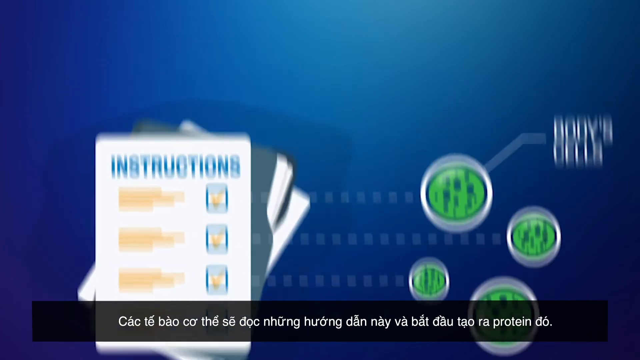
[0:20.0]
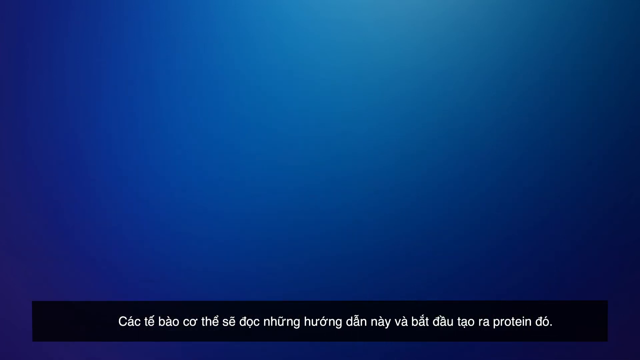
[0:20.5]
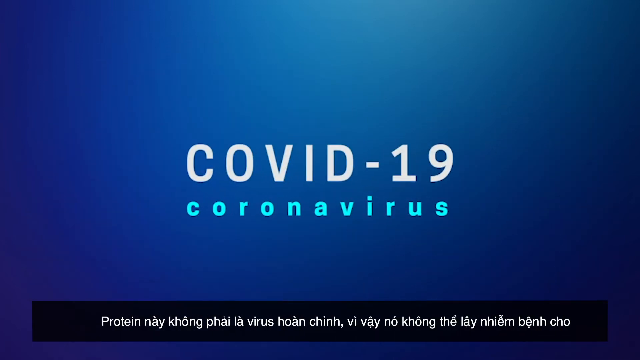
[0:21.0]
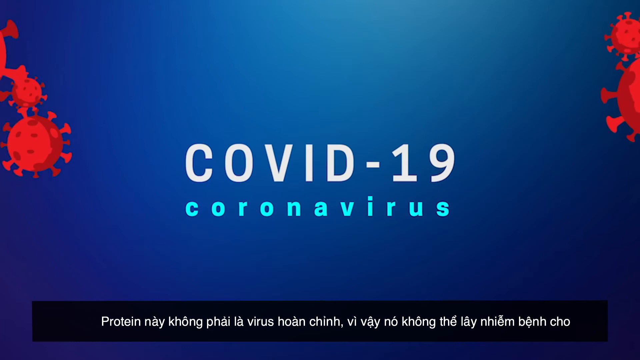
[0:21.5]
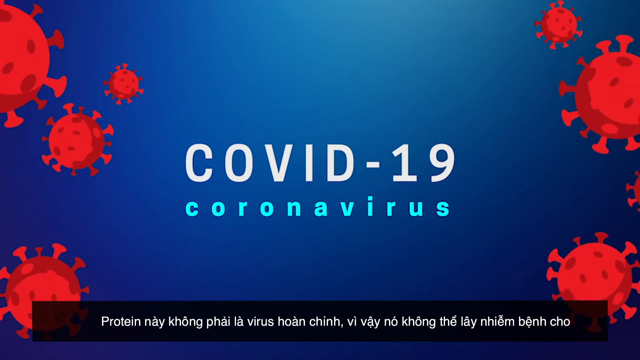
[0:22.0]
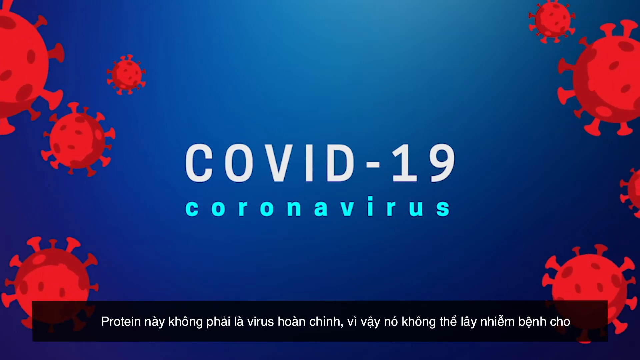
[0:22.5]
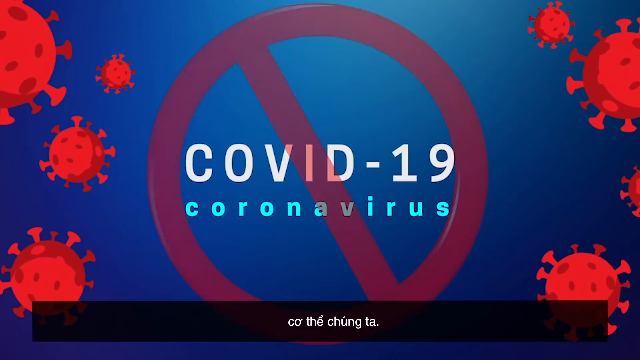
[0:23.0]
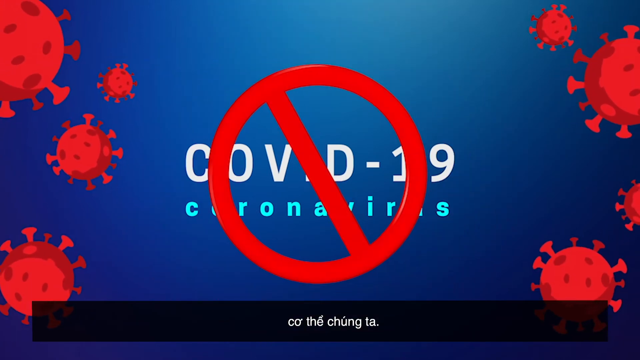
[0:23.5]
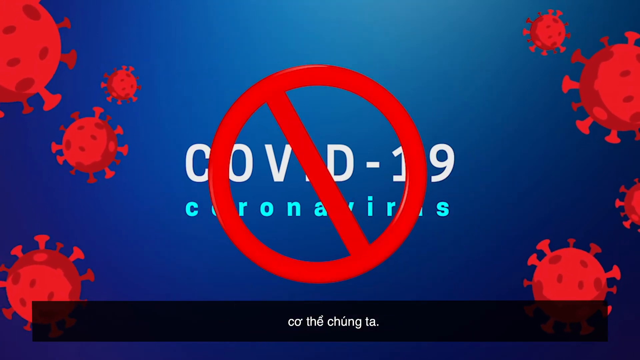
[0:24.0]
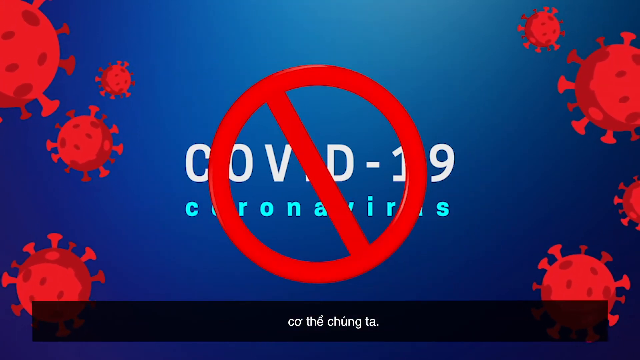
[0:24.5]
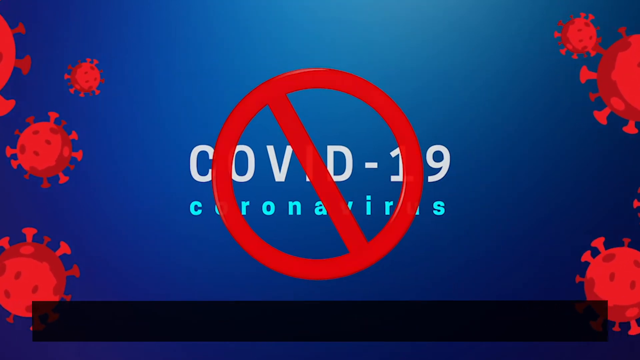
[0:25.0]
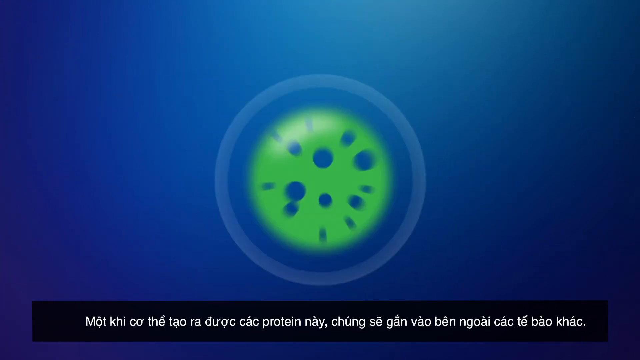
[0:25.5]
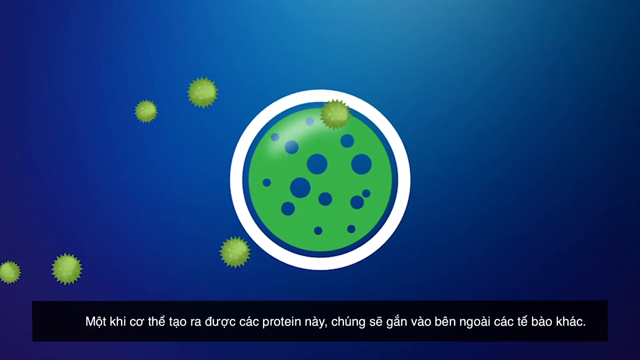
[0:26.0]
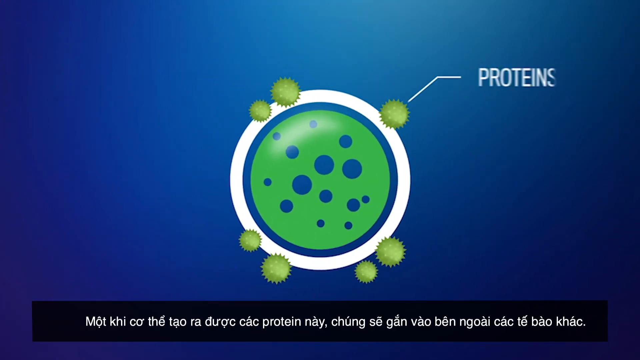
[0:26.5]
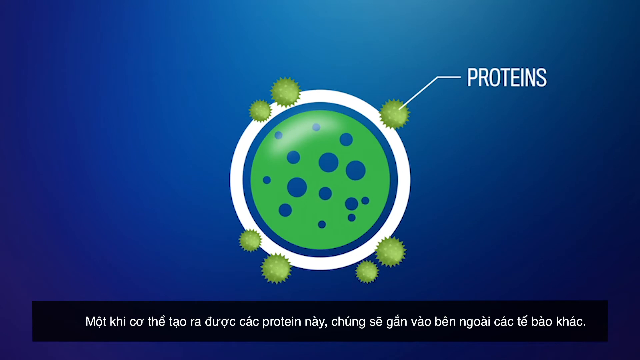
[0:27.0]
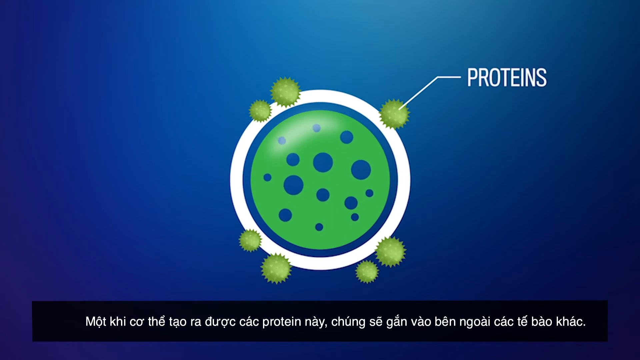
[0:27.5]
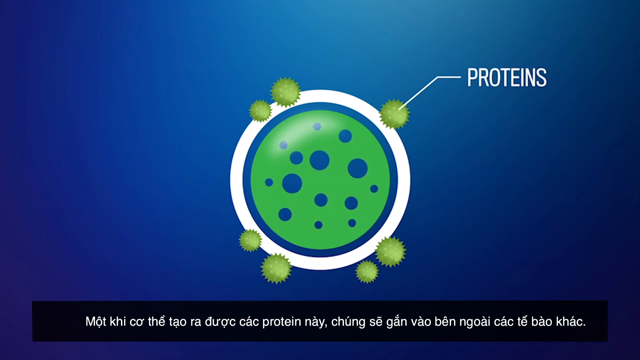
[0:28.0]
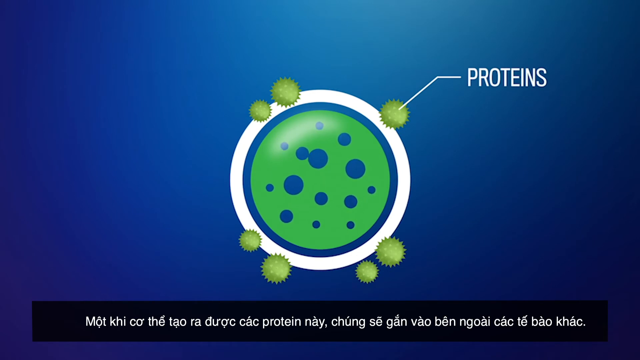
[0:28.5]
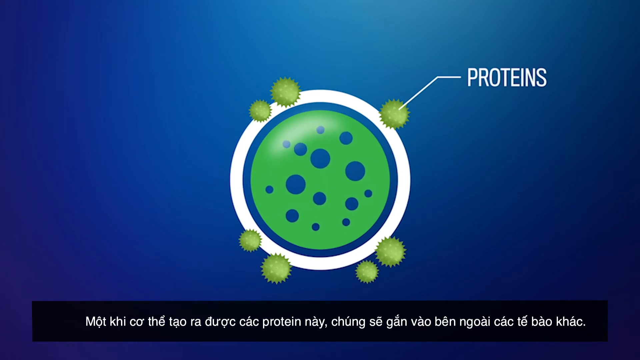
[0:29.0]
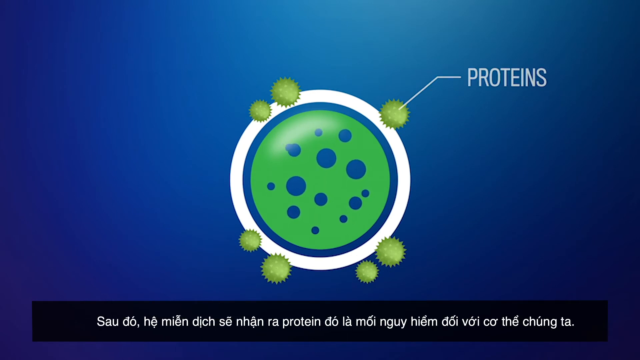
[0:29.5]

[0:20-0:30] On a blue background, "COVID-19" appears in the middle in large bold white font, with "coronavirus" underneath in smaller lowercase teal font. Graphics that somewhat resemble circular red bacteria come onto the screen, and then a red circle with a red line through it goes over the words "COVID-19 coronavirus" in the middle of the screen. The screen changes, keeping the blue background, to show a large green circle in the middle with small dark blue specks inside. Spiky-looking small lime green circles float around it and stick to the side of the larger green circle. A line touches one of the smaller green circles, and next to it the text reads "proteins". Smaller blue, bacteria-looking circles then fly in from the left side of the screen and attach themselves to the larger green circle in the middle.